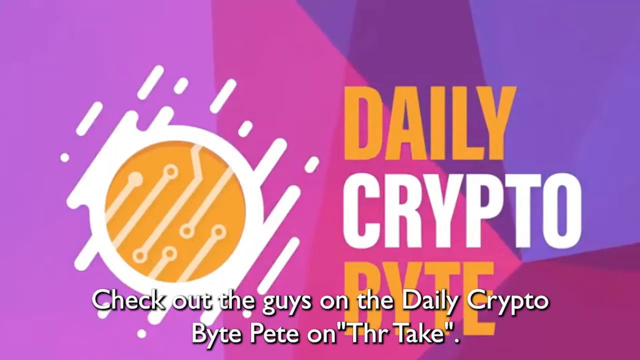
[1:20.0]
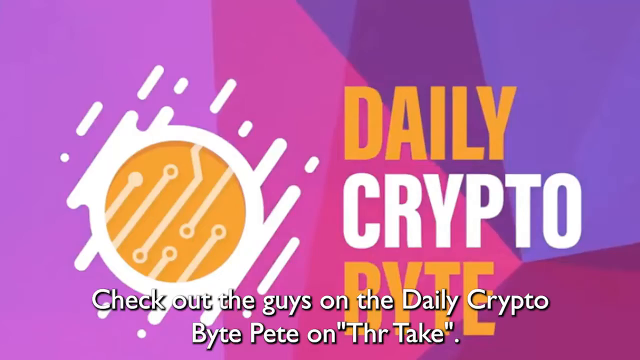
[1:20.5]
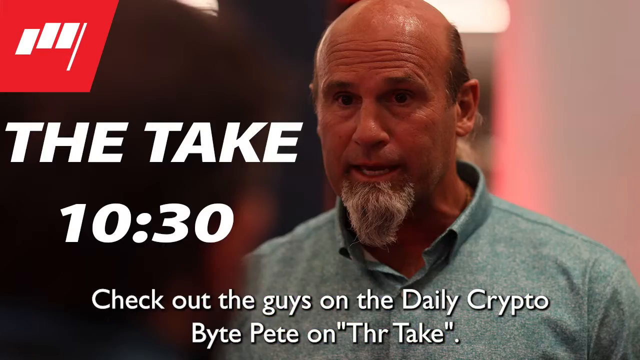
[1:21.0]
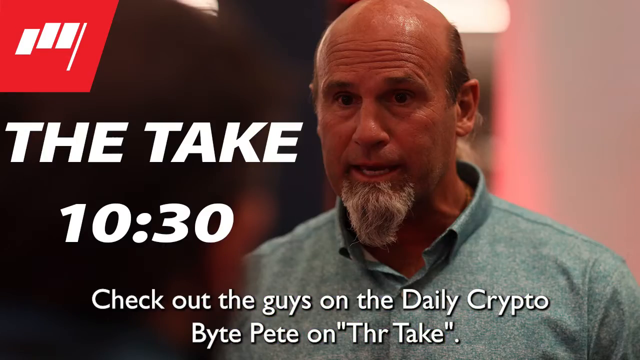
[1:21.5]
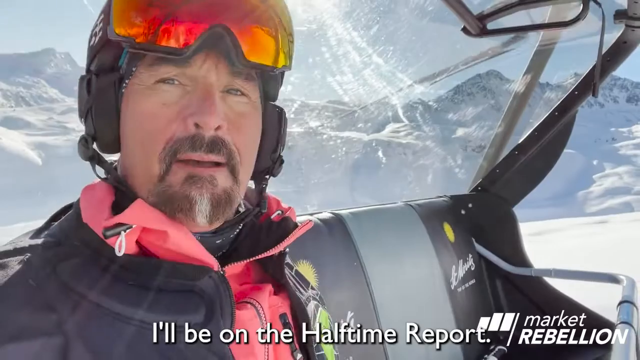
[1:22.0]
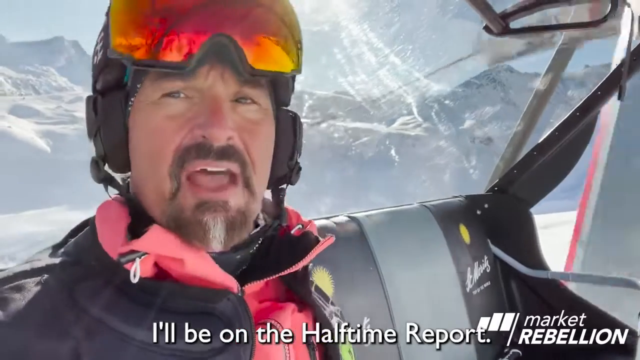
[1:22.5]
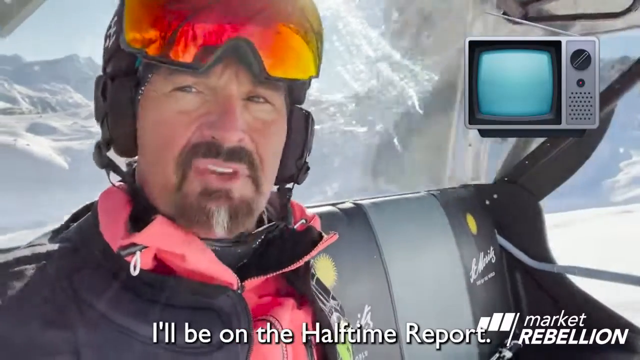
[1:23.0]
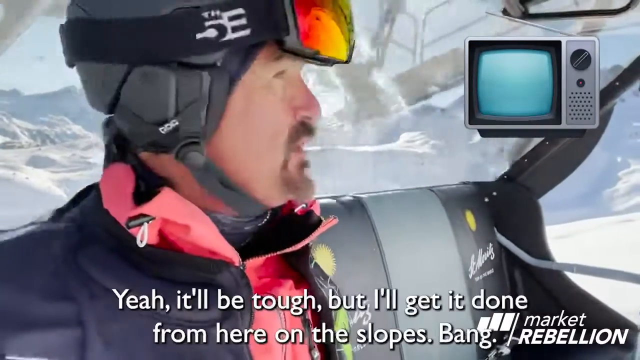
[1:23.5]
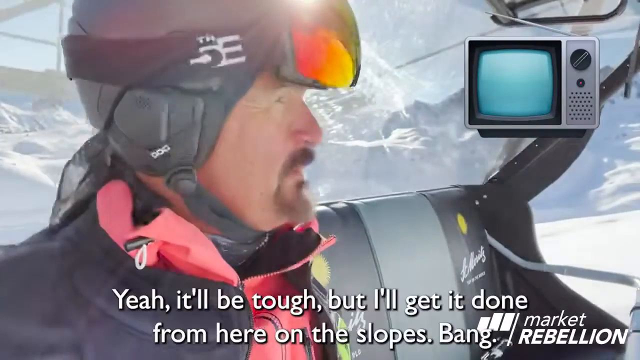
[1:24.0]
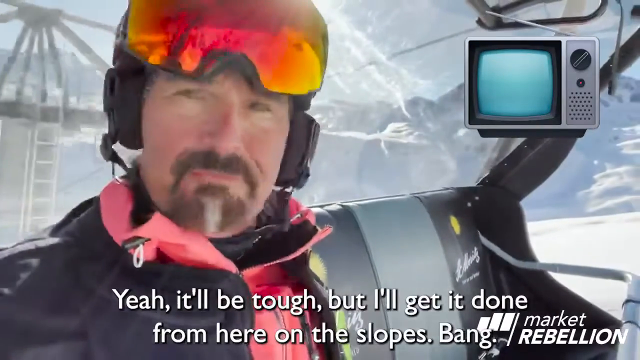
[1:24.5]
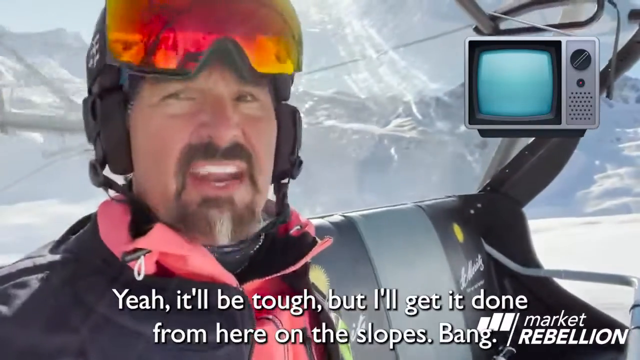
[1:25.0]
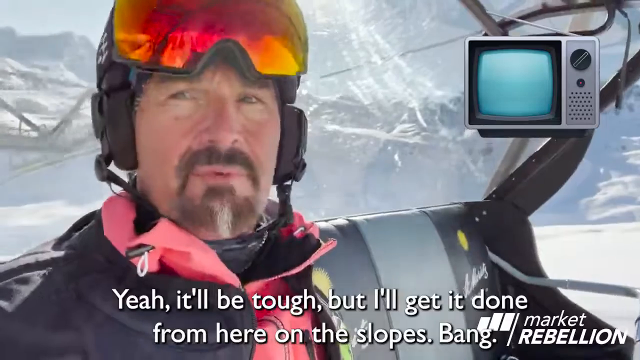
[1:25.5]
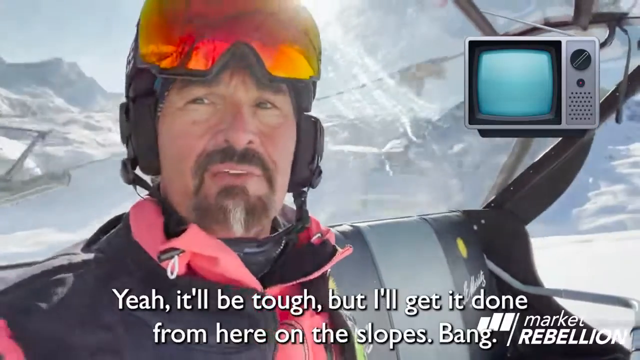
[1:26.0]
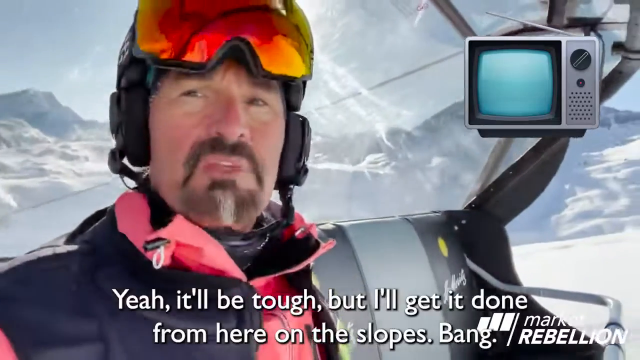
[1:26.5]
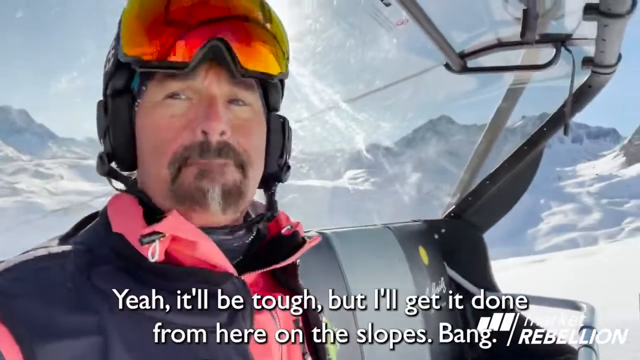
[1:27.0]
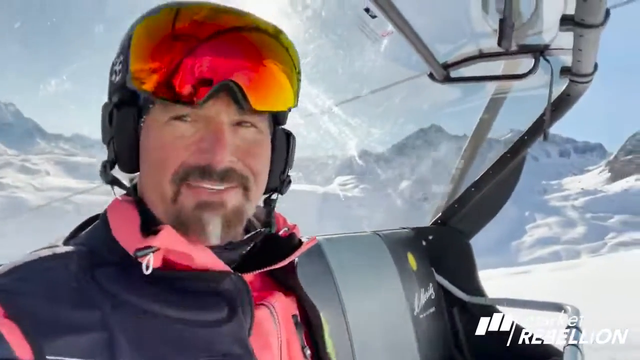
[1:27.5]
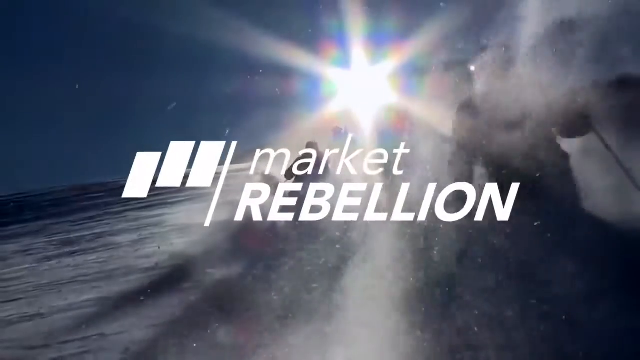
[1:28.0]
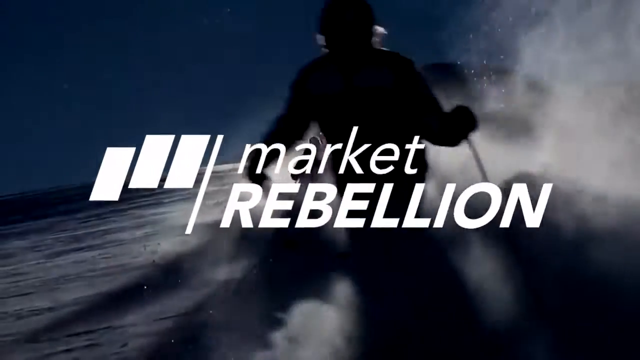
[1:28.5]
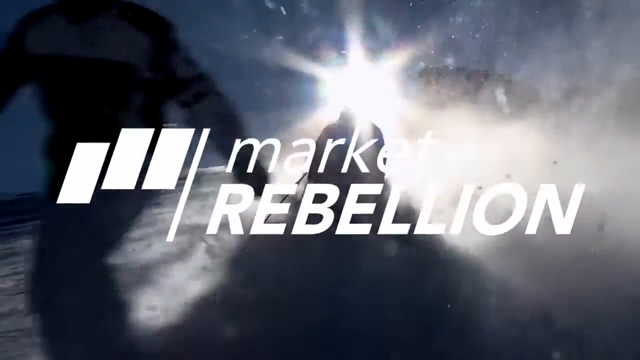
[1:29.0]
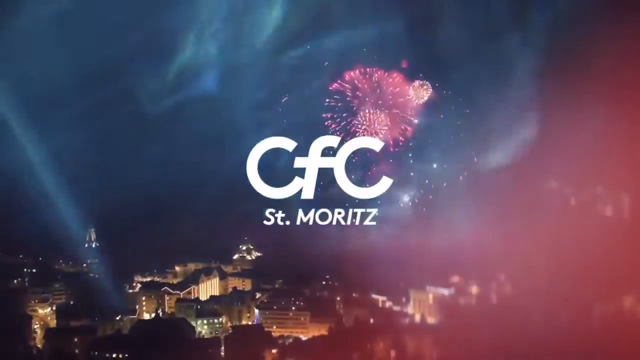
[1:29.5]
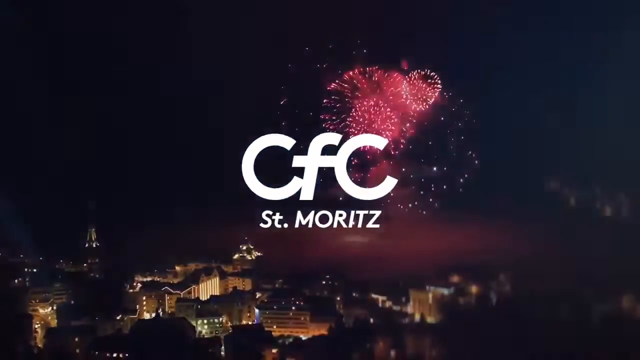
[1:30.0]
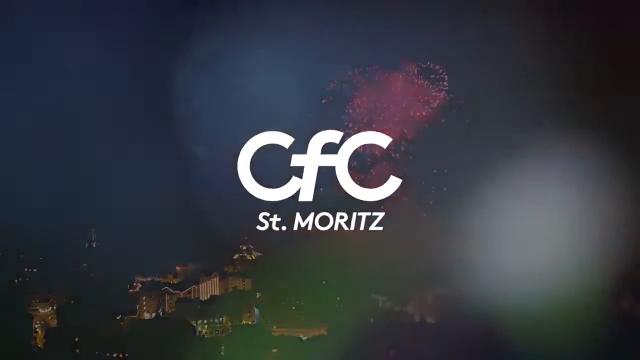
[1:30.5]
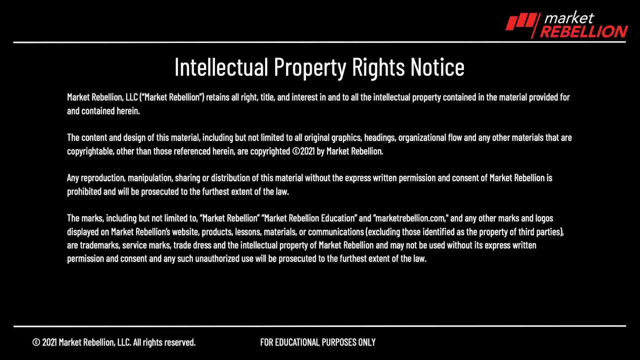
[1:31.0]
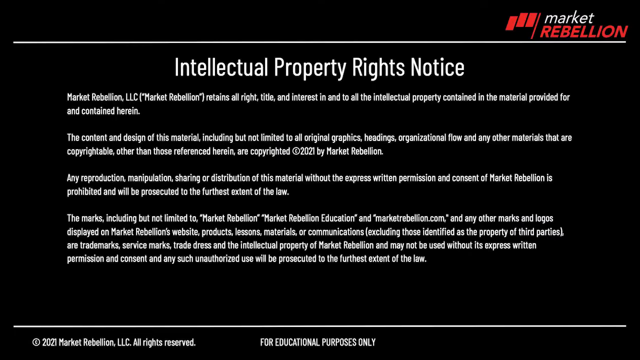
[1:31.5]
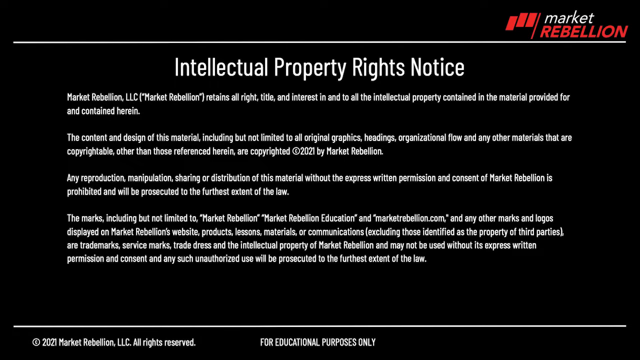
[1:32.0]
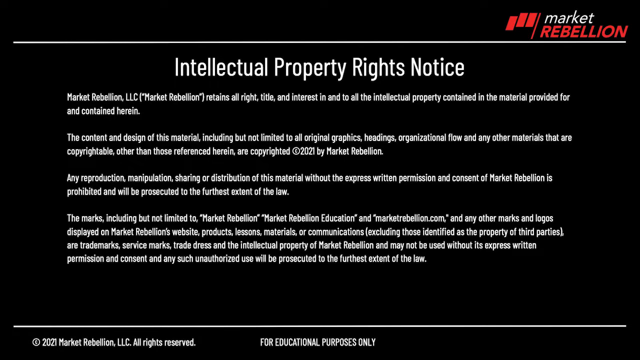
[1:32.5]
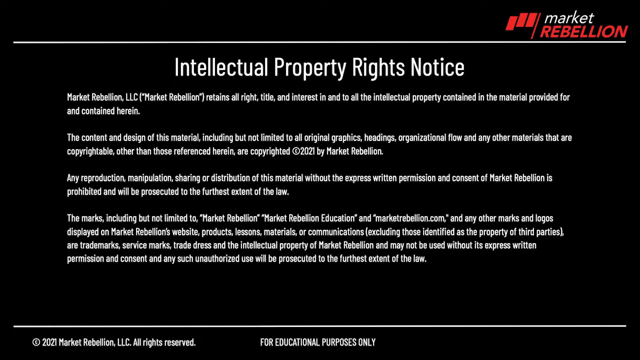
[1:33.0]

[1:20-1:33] The same man, apparently named John, appears without his helmet; his beard is shaved off and he has only a small goatee. A caption reads "check out the guys on the Daily Crypto", with the word "the" misspelled with an R instead of an E. Another caption reads "I'll be on halftime report, yeah it'll be rough, it'll be tough, but I'll get it done from here on the slopes, bang." The video is credited to Market Rebellion, and it ends with an intellectual property rights notice. The show appears to be called the Daily Crypto Bite.